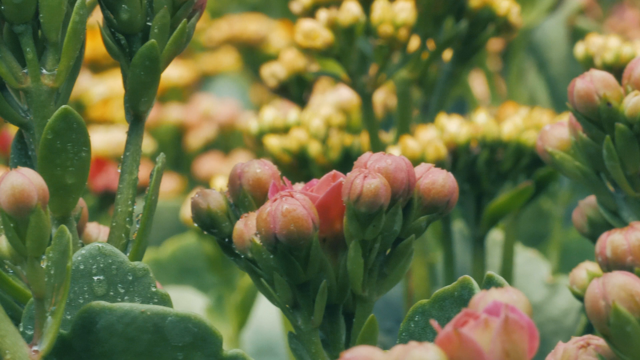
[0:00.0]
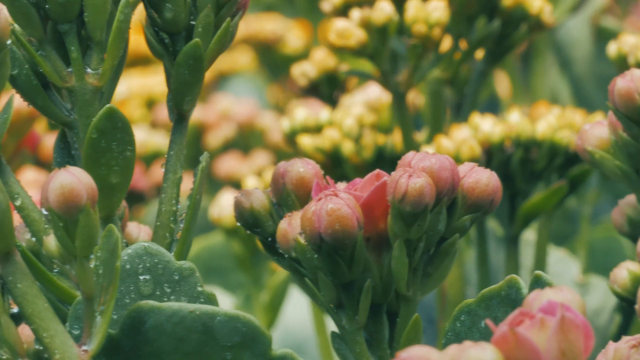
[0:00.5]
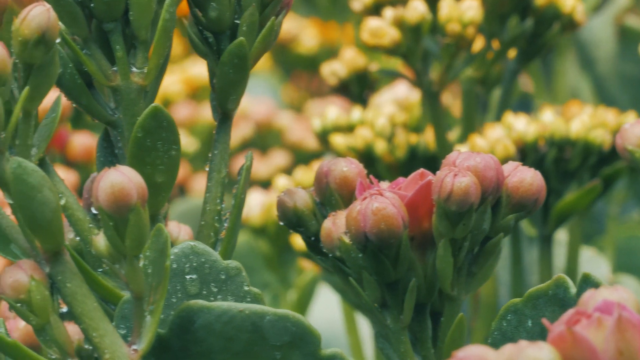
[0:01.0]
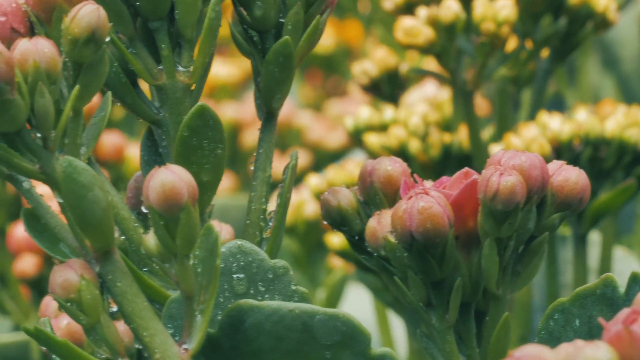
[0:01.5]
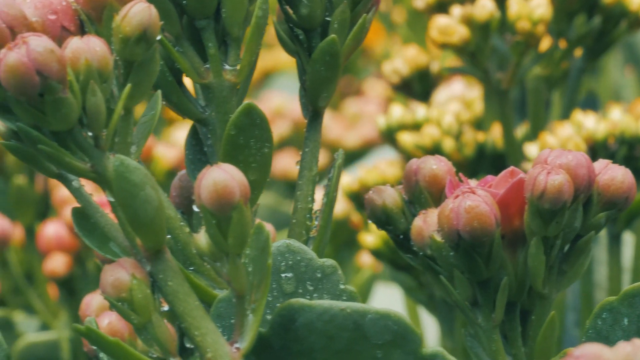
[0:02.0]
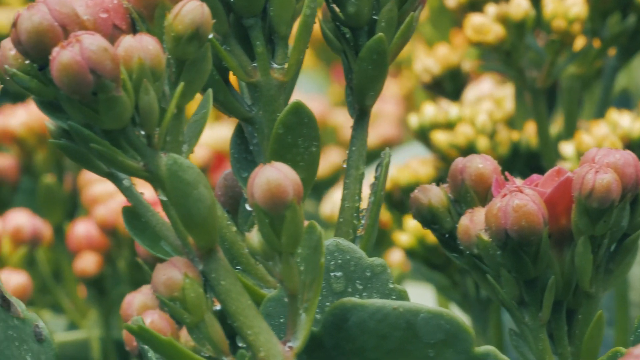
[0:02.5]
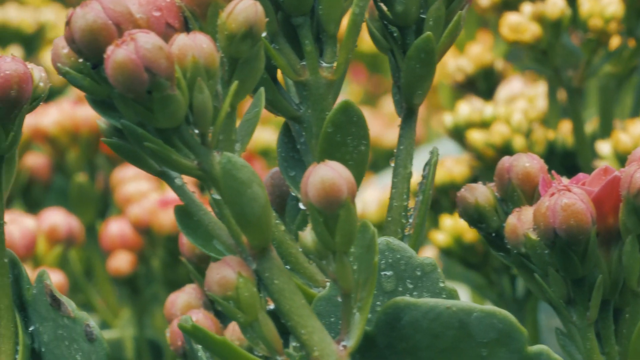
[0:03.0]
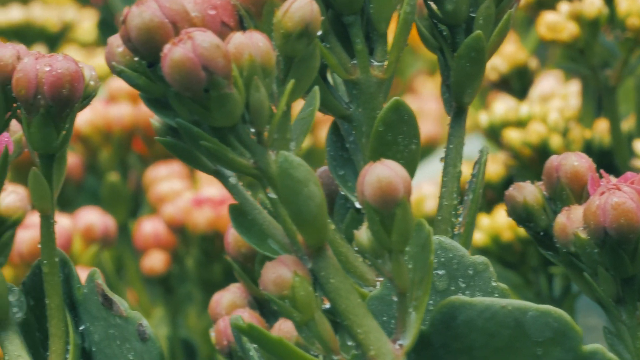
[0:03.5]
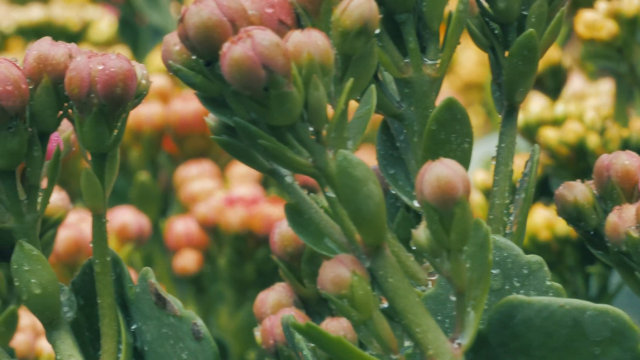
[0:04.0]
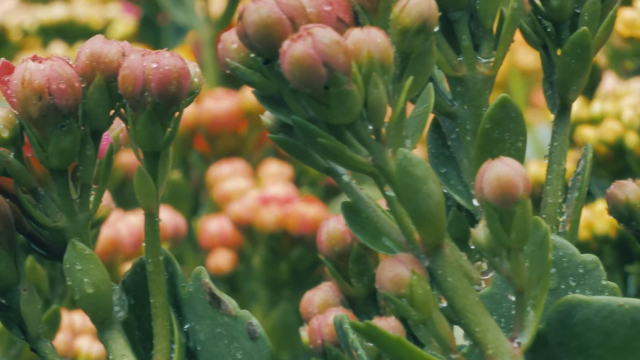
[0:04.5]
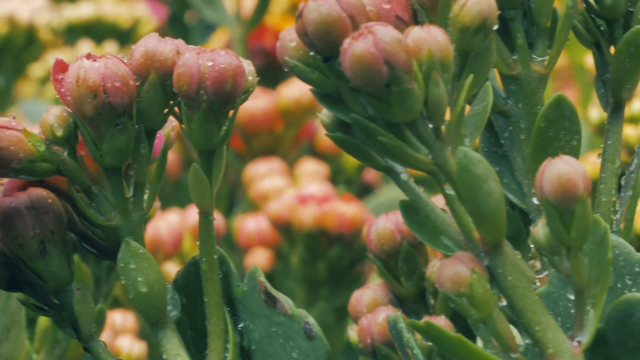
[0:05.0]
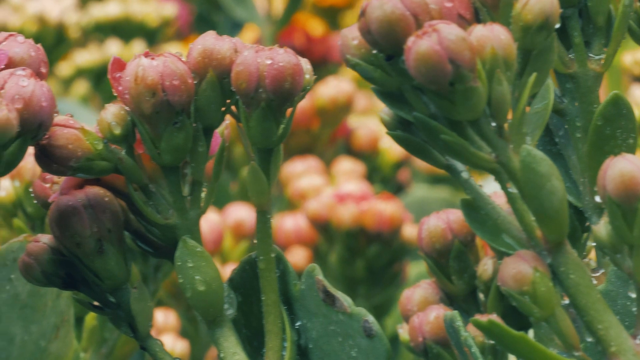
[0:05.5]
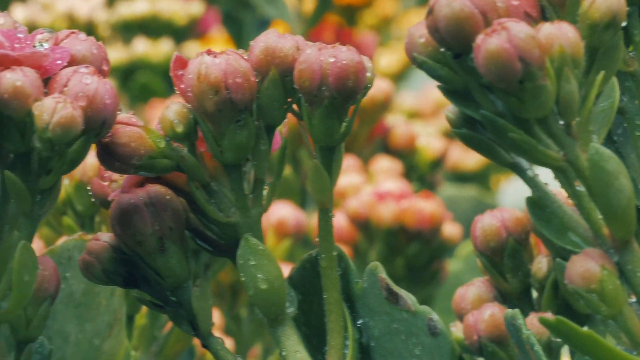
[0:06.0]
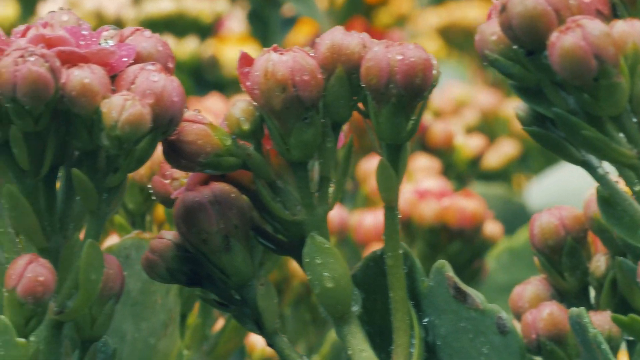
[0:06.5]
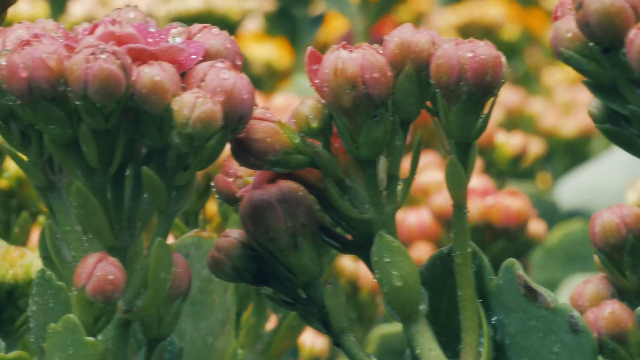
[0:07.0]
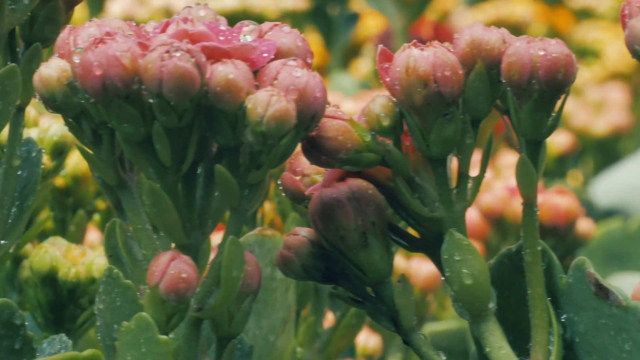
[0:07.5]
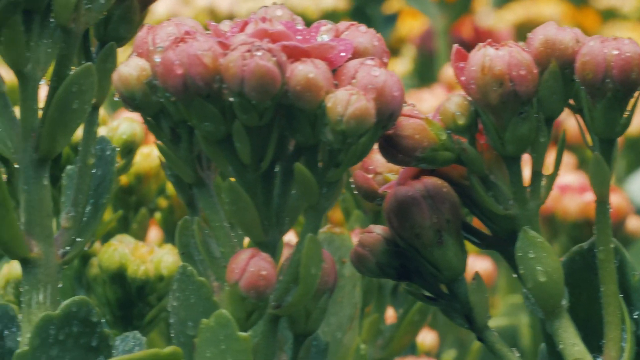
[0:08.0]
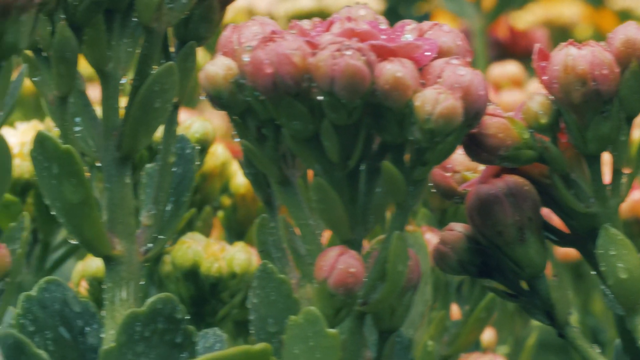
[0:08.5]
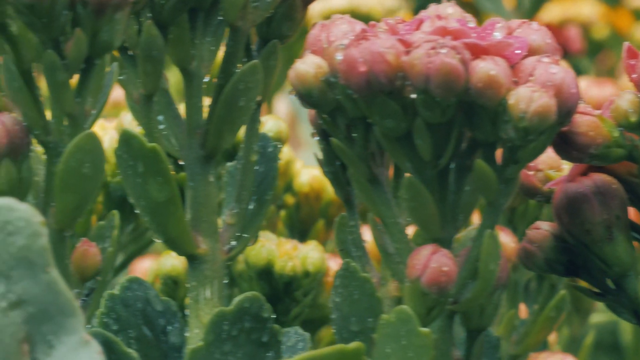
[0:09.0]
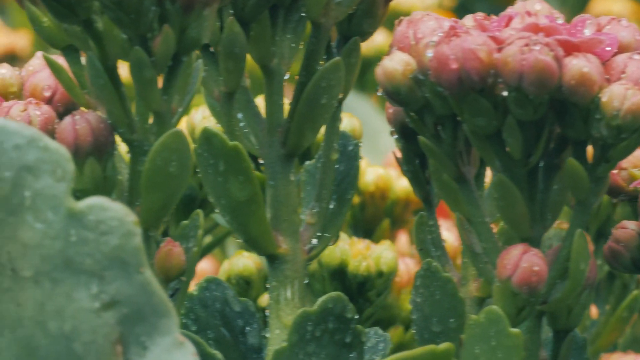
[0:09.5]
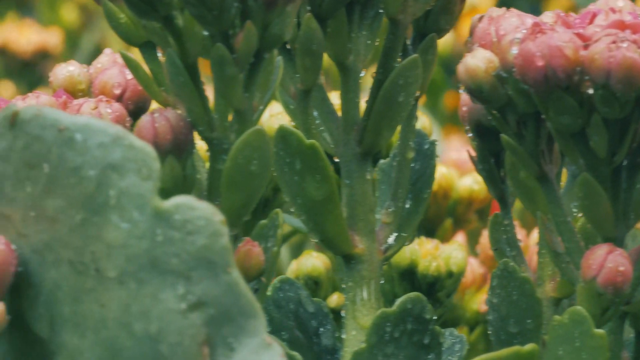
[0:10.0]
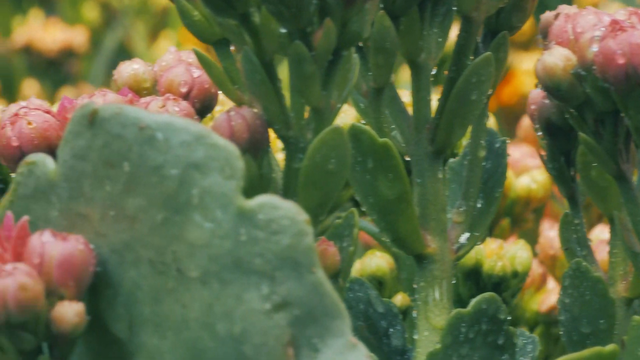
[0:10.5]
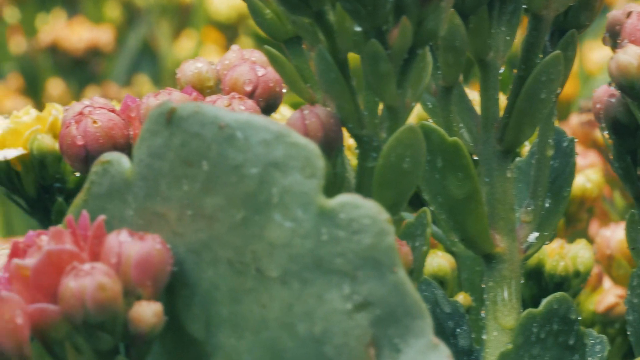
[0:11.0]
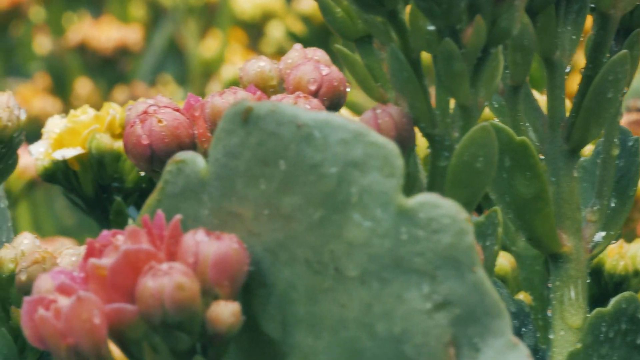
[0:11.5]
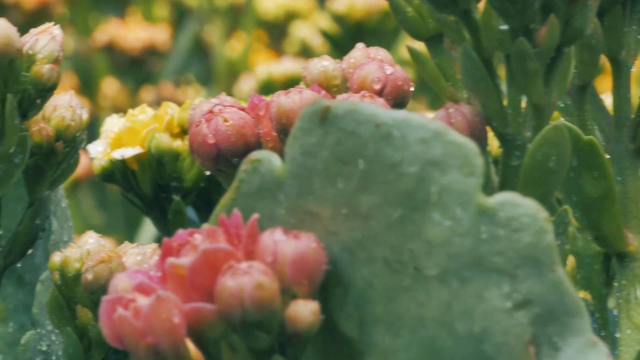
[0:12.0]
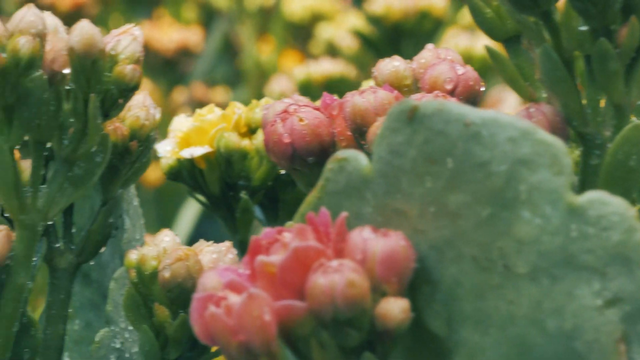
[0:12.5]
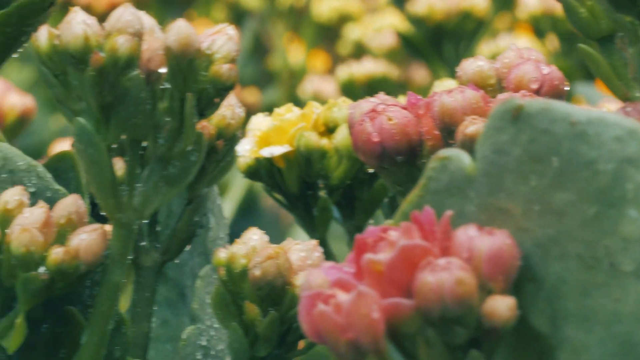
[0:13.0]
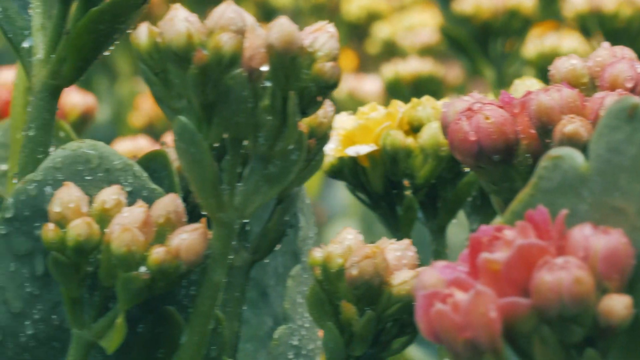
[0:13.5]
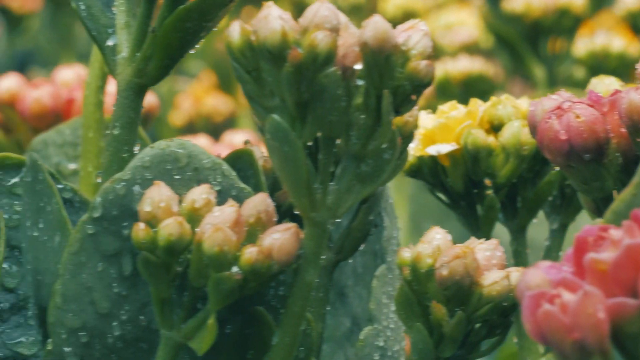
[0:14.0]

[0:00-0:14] A video that looks to be a pan across a plant that almost looks fake. The camera pans so the view moves from right to left across the screen. The image is a bunch of different flowers that seem not to have bloomed yet. They look almost fake, like claymation or some type of still shot, with liquid water seemingly just sitting on the petals, giving it more of an artistic look than actual nature. The shot is a single continuous horizontal pan from the right side to the left side, focusing on whatever is in front of the frame without zooming in. The colours are mostly green, with a little pink and some yellow.